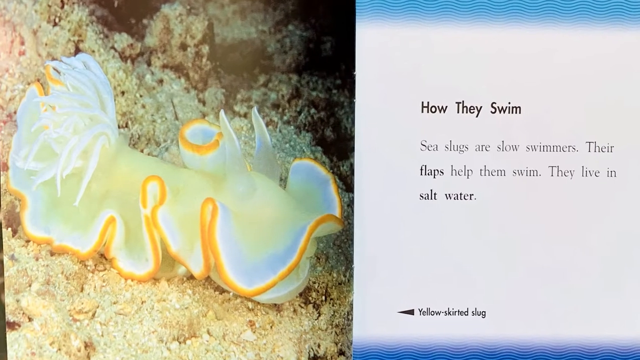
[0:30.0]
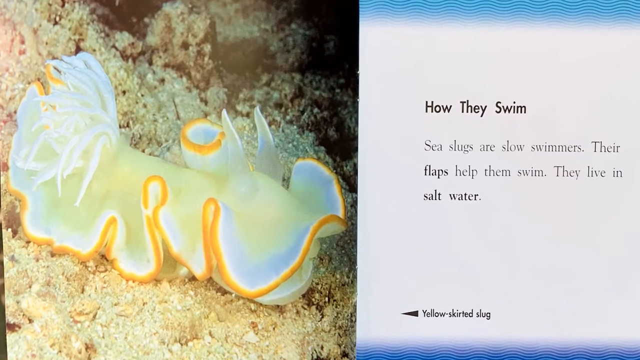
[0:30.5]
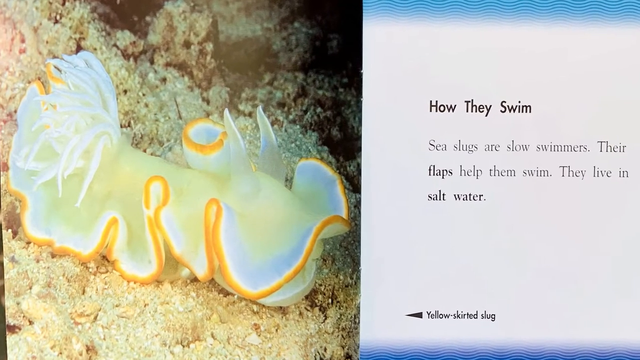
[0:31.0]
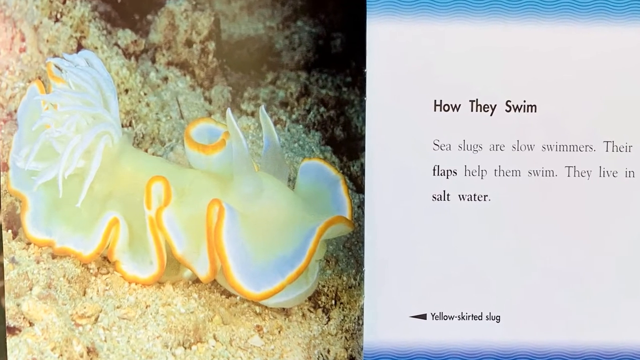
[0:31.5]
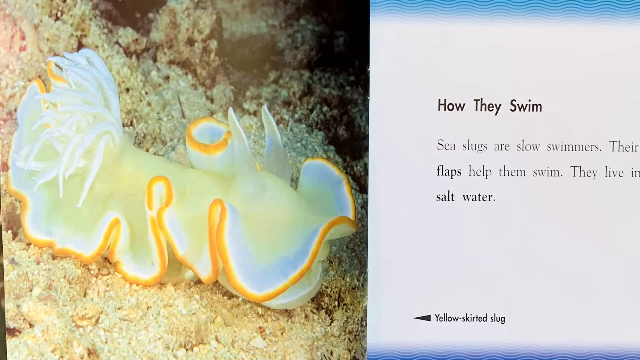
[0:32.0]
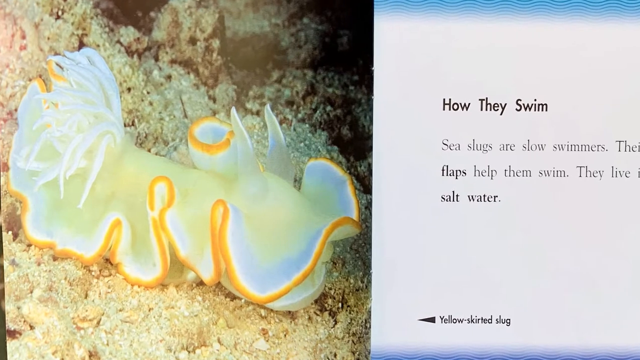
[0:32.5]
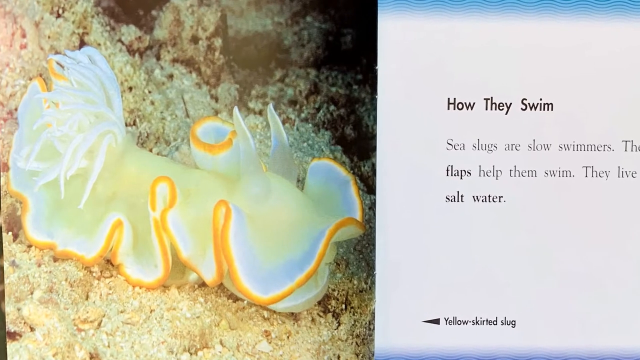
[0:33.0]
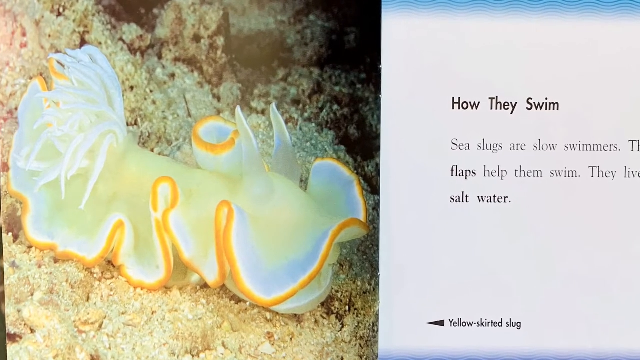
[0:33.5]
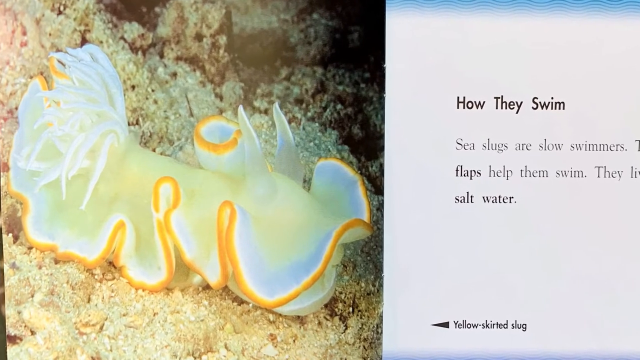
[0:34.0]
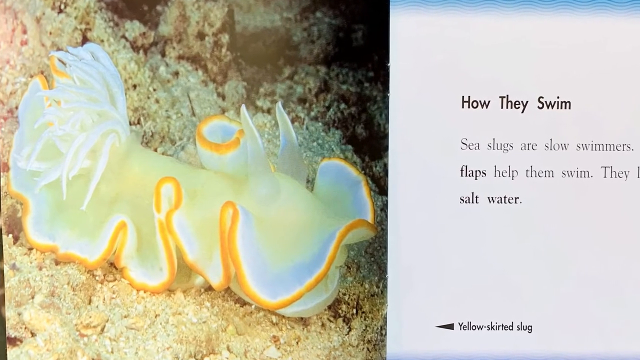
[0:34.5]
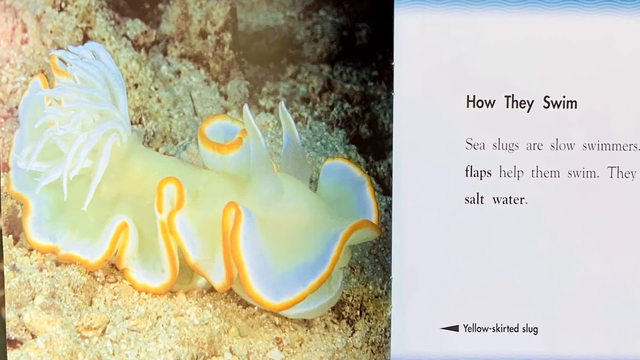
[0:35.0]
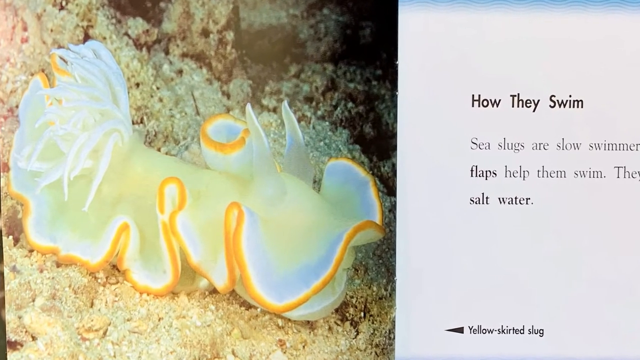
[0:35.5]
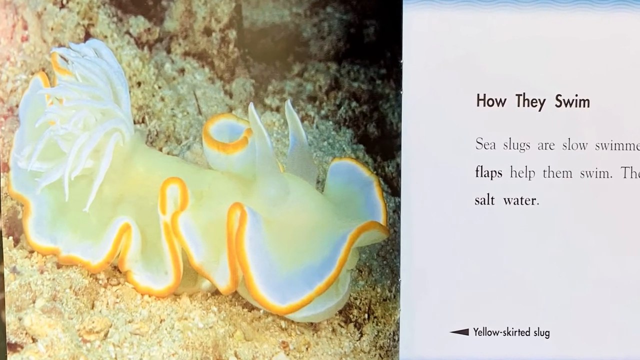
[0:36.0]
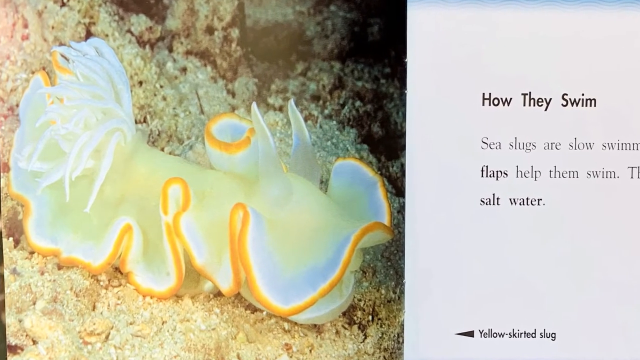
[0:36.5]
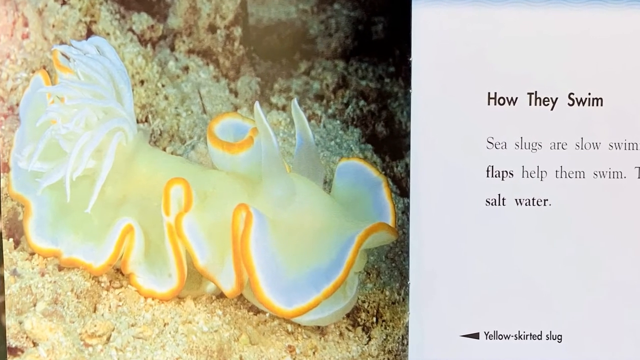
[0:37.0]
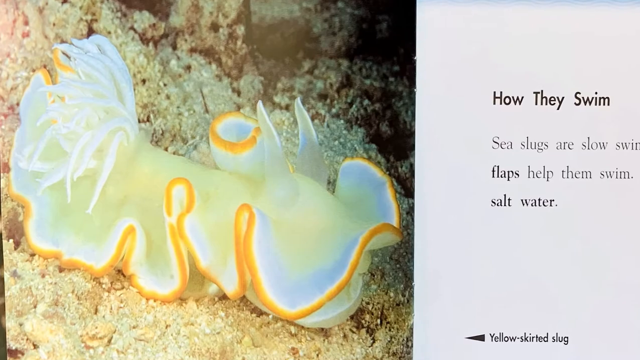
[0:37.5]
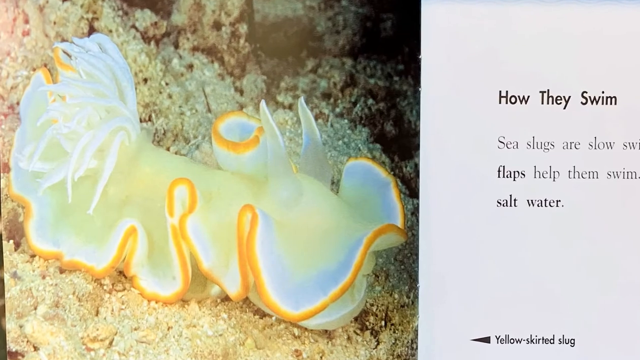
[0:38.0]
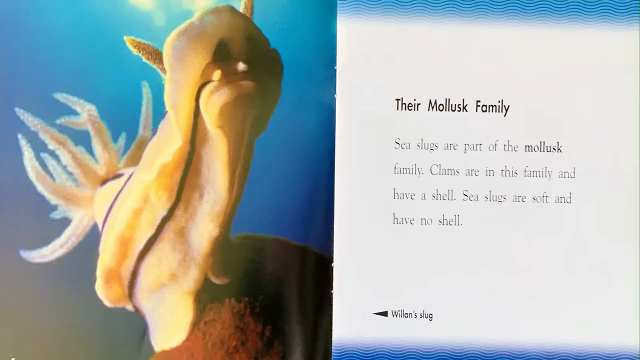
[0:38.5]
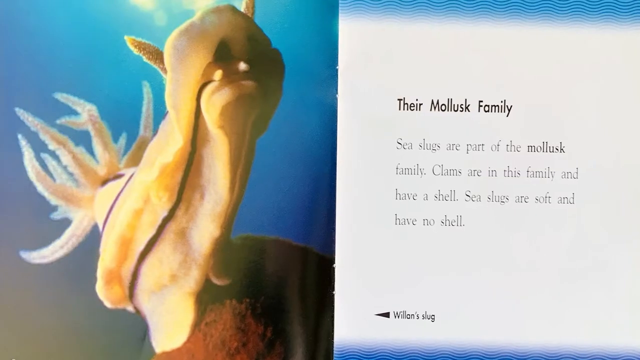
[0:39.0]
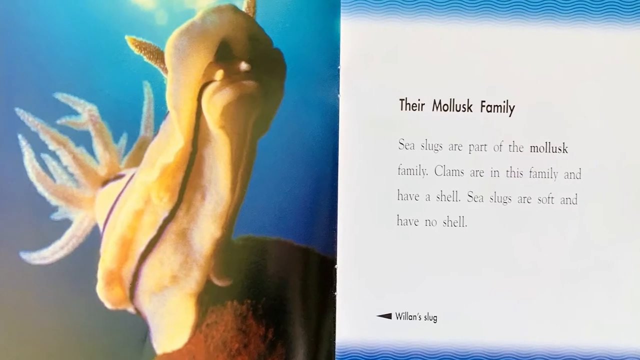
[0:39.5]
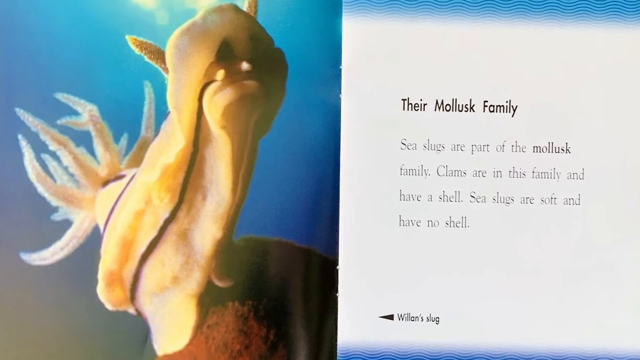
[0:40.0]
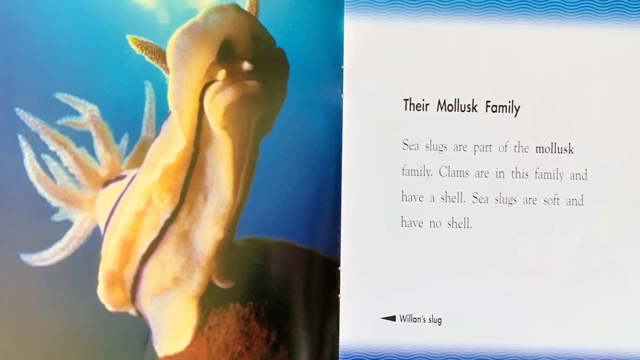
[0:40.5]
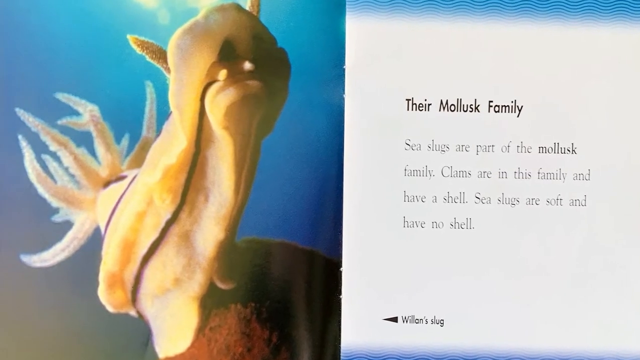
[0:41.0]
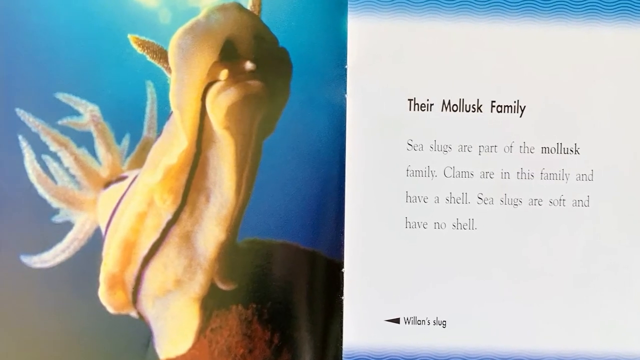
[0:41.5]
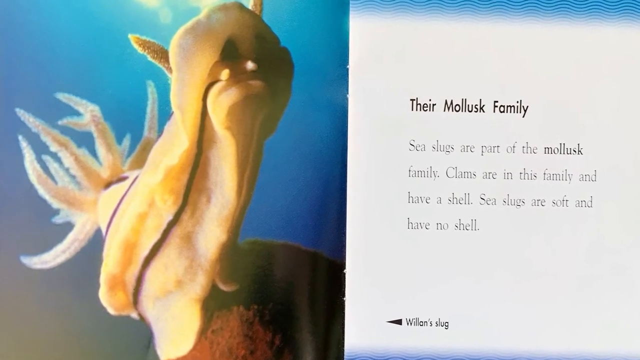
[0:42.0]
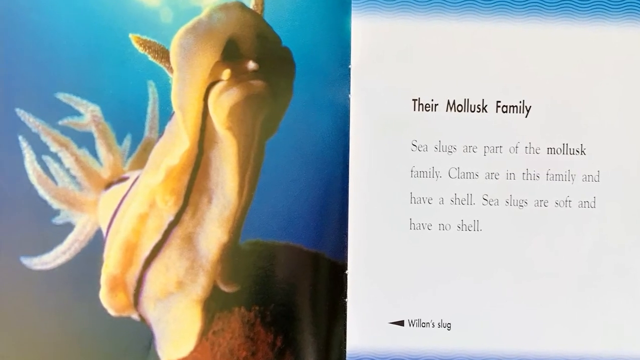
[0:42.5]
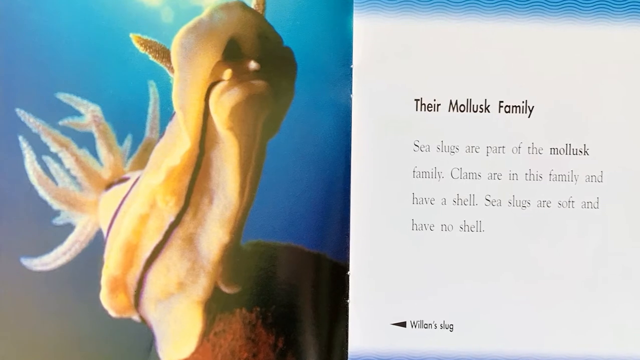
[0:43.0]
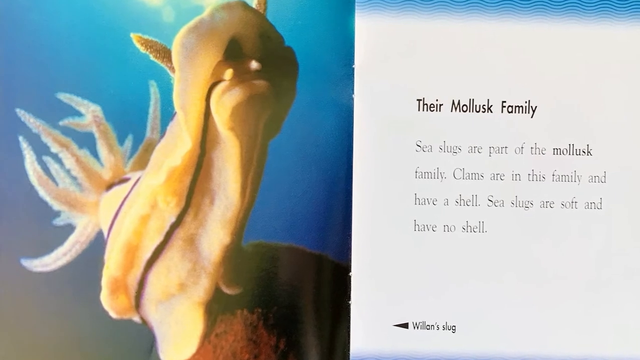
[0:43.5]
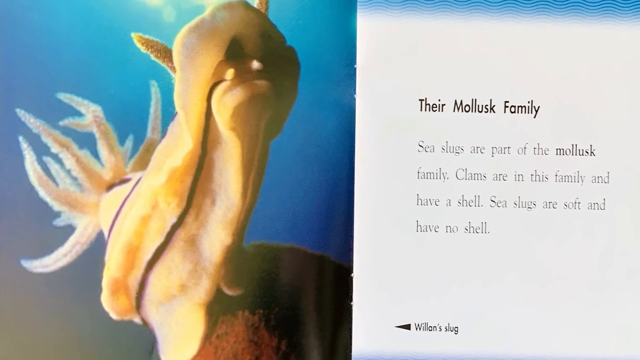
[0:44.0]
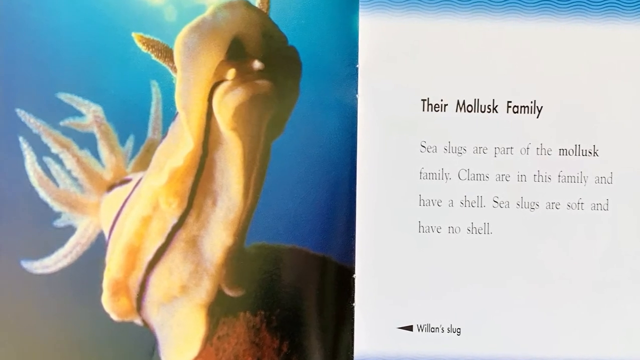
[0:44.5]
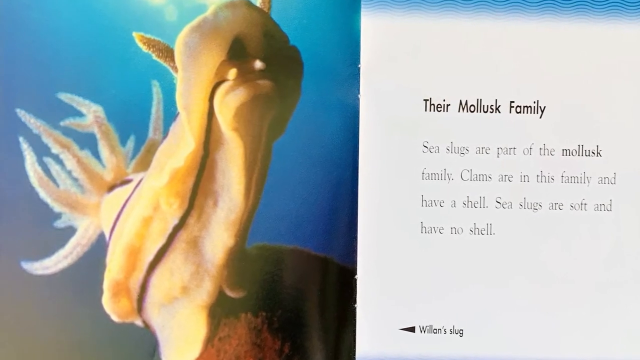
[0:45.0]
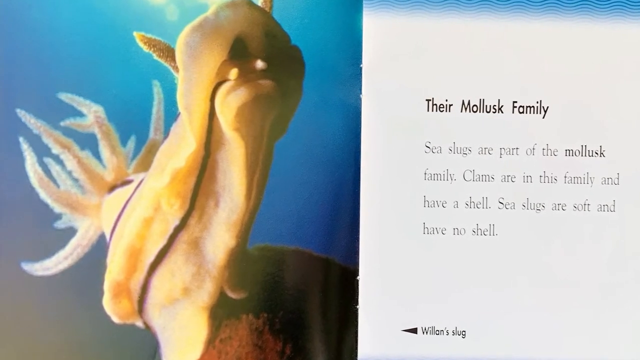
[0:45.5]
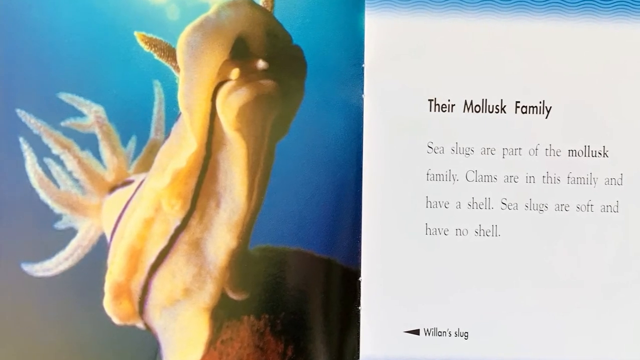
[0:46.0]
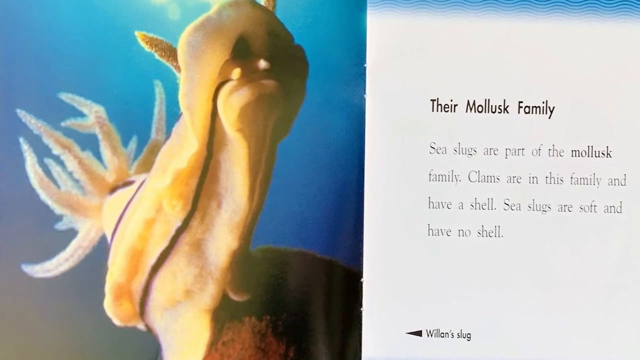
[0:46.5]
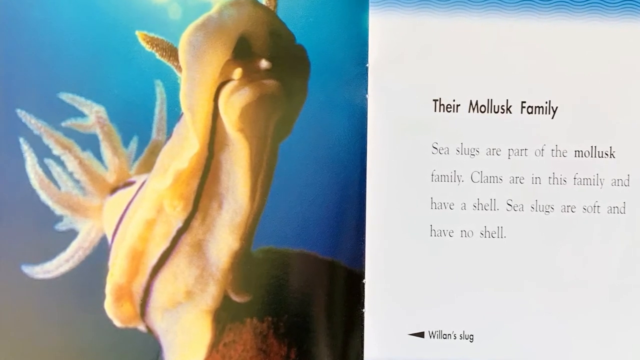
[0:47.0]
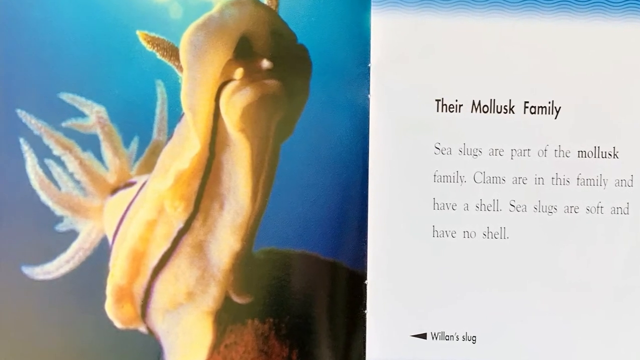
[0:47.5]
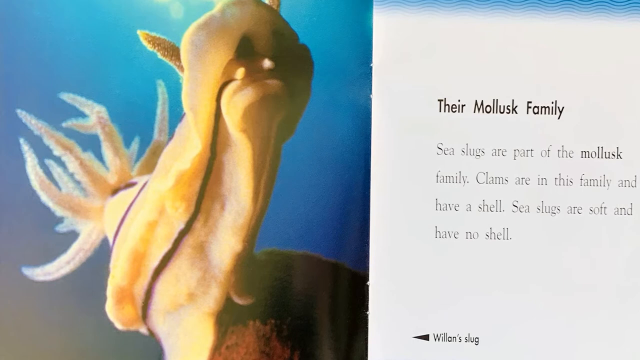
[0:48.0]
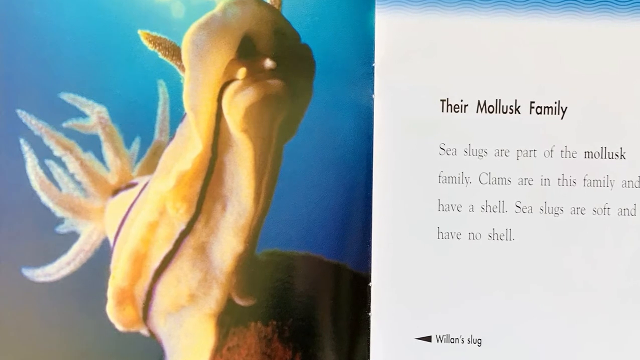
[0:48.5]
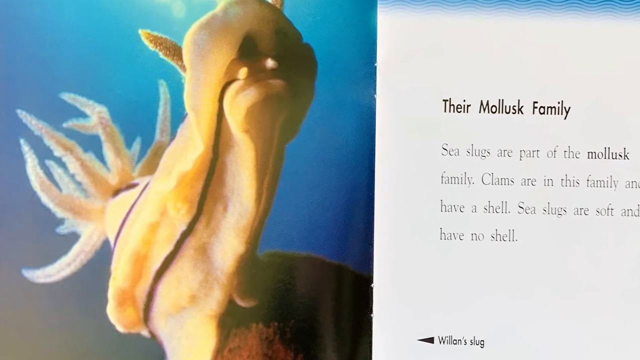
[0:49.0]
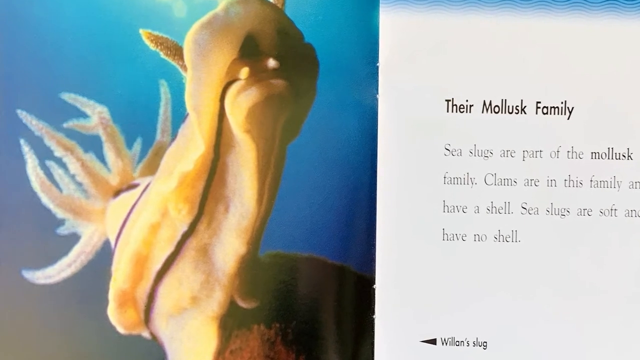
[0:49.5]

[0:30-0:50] Side-by-side book pages are shown. On the left is a close-up image of a light yellow sea slug with somewhat frilly edges outlined in orange, two transparent yellow horns sticking out of its head, and a tail that looks like a bunch of thick white string. It appears to be on an ocean floor of tan-colored dirt. On the right is a white page with the bold black heading "how they swim" at the top and, in slightly smaller, less bold font, "sea slugs are slow swimmers. Their flaps help them swim. They live in saltwater." At the bottom of the page, a black arrowhead points to the photo on the left, next to the label "yellow skirted slug." The view zooms in on the photo of the transparent yellow slug. The screen then changes to another spread of a photo and a page of text. The photo on the left appears to show a large yellow slug with thin dark purple lines down its side, a tail that looks like thin tails bunched together coming from its backside, and two thin horns on its head. The underside seems to be visible, and beneath its mouth there appear to be two small white teeth protruding. On the white page on the right, a black heading reads "their mollusk family," and beneath it, in less bold font, "Sea slugs are part of the mollusk family. Clams are in this family and have a shell. Sea slugs are soft and have no shell." At the bottom of the page, a black arrowhead points to the image on the left, next to the label "Willan's Slug." The view slowly zooms in on the image on the left.